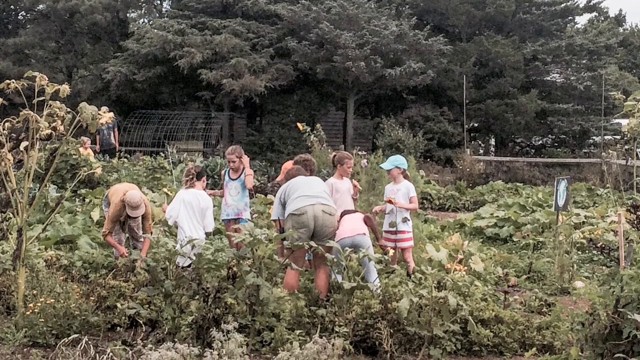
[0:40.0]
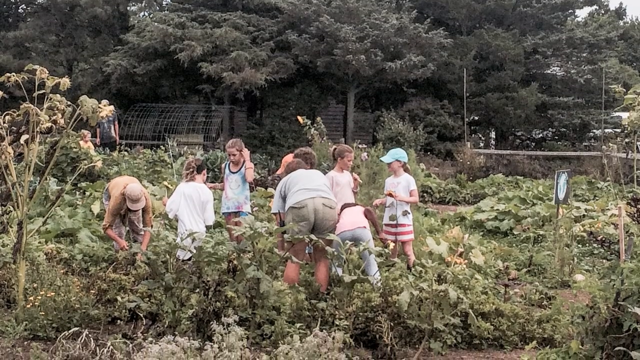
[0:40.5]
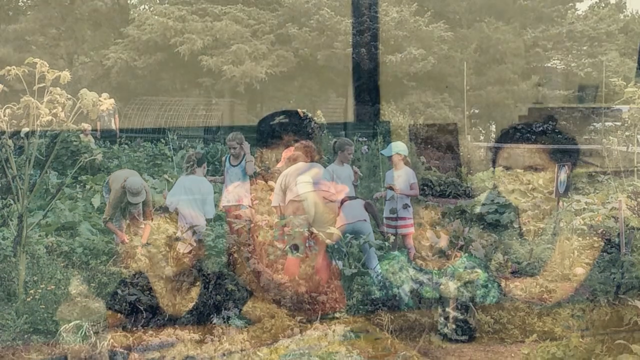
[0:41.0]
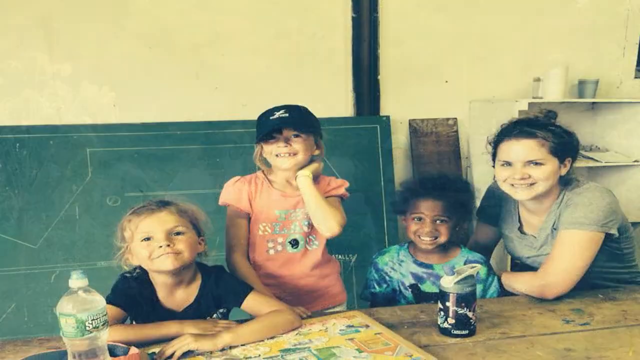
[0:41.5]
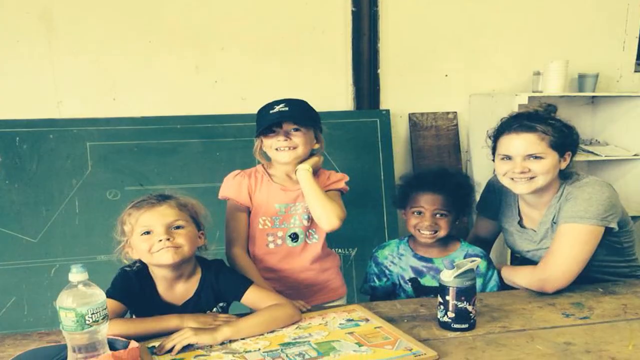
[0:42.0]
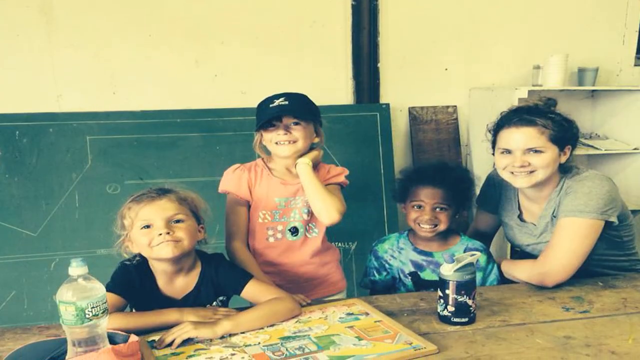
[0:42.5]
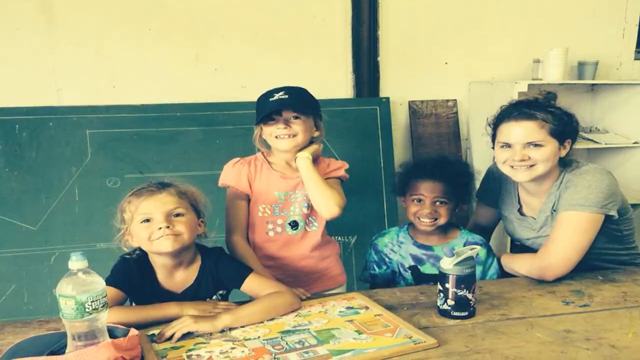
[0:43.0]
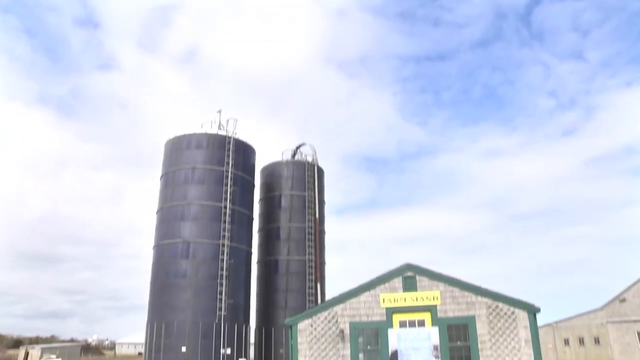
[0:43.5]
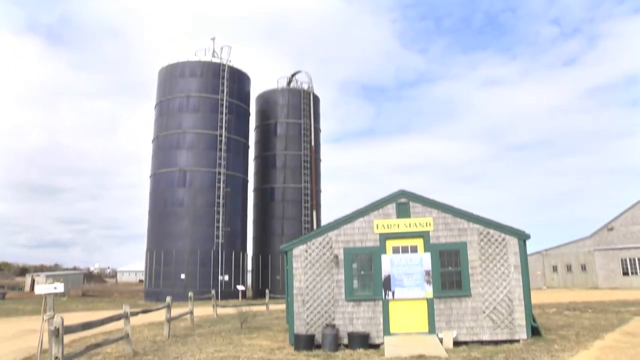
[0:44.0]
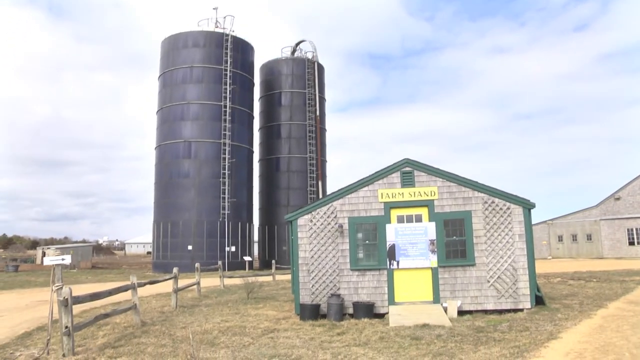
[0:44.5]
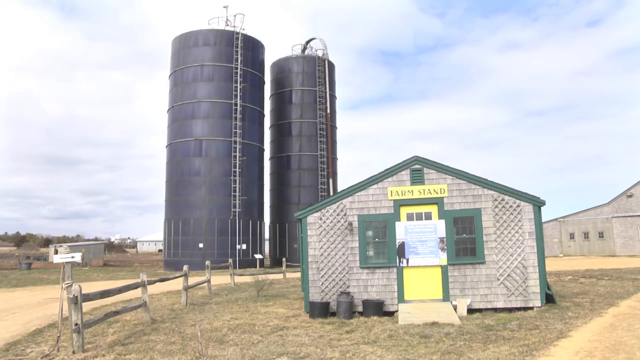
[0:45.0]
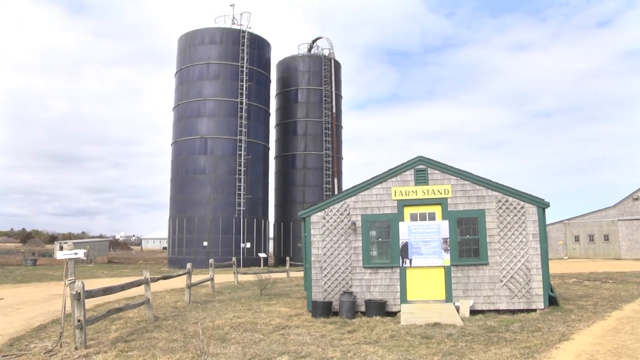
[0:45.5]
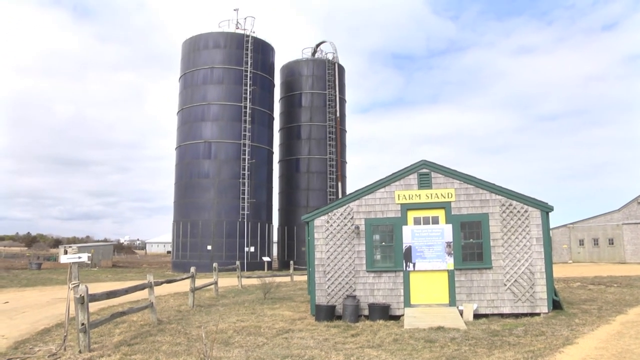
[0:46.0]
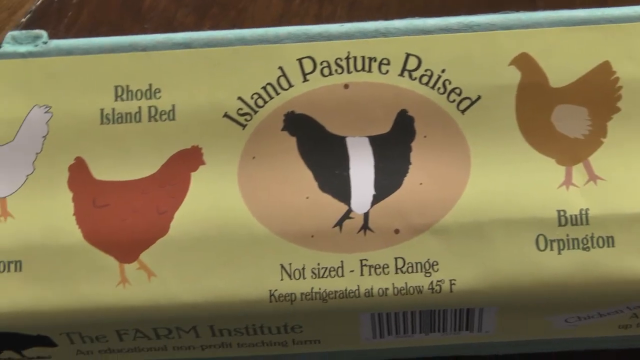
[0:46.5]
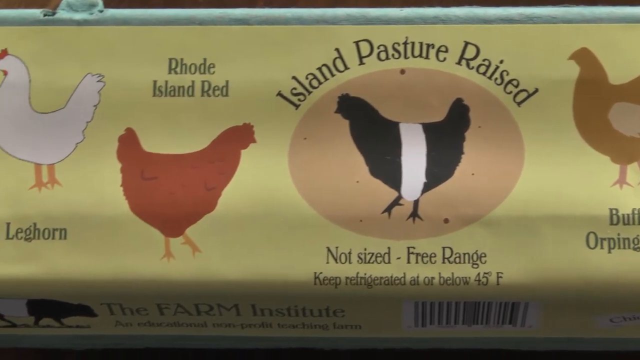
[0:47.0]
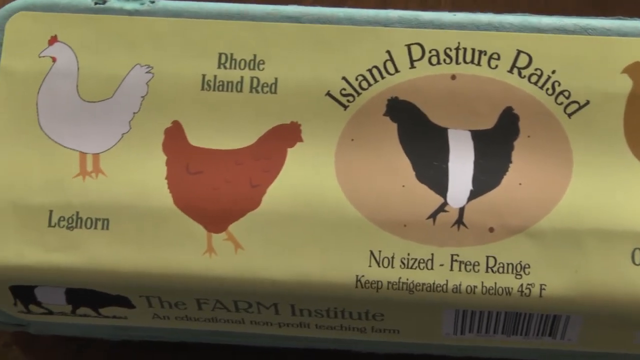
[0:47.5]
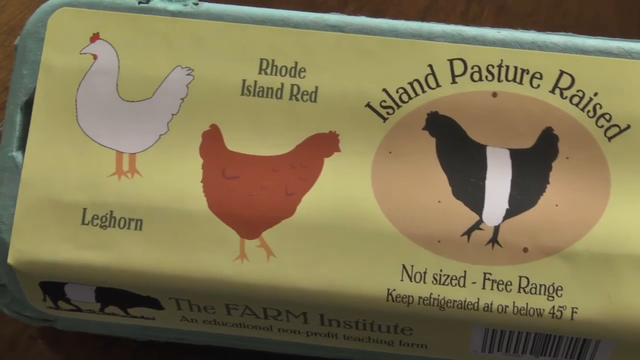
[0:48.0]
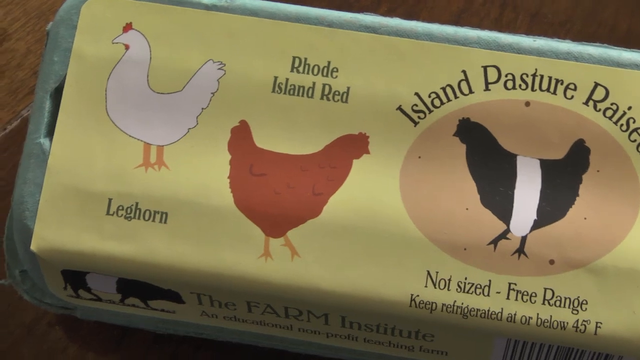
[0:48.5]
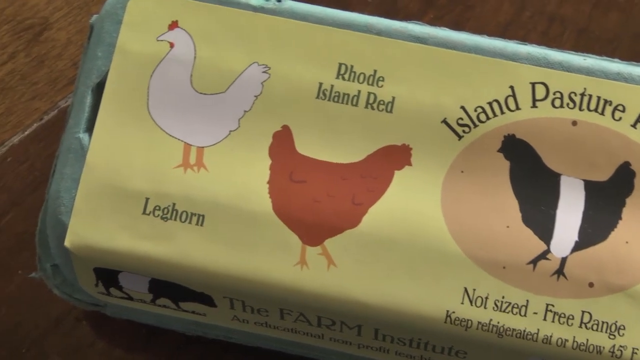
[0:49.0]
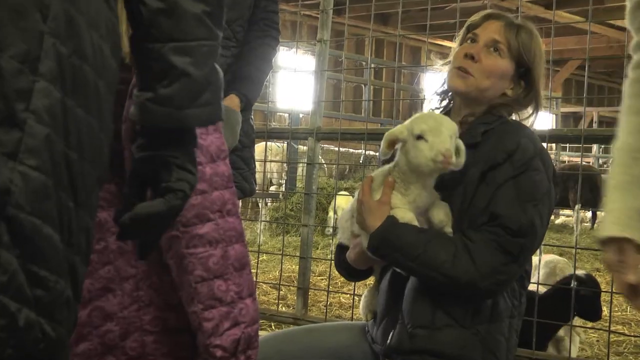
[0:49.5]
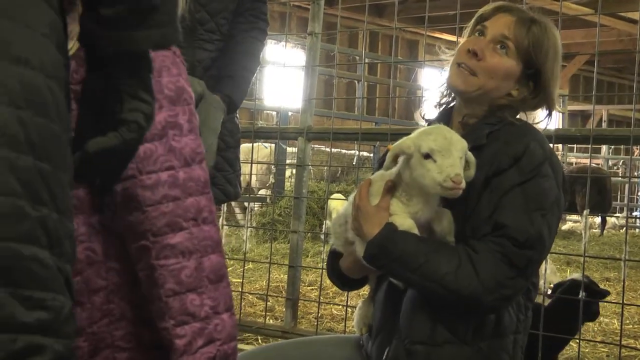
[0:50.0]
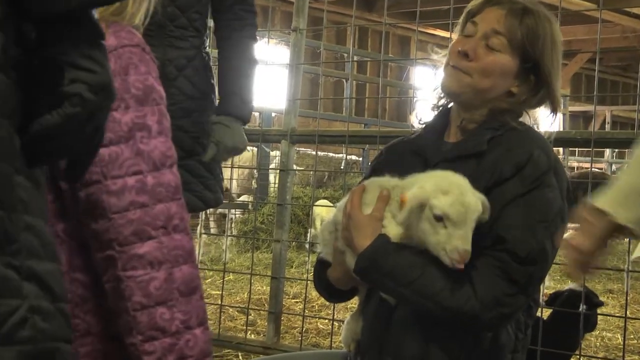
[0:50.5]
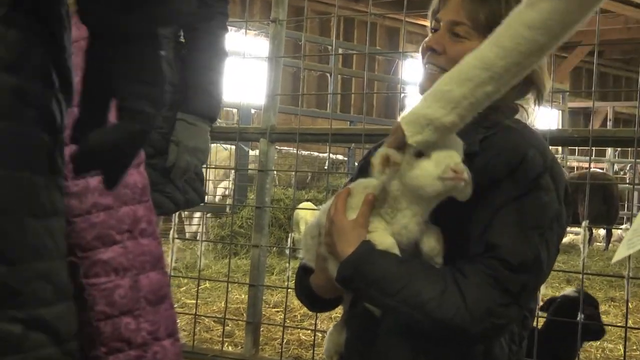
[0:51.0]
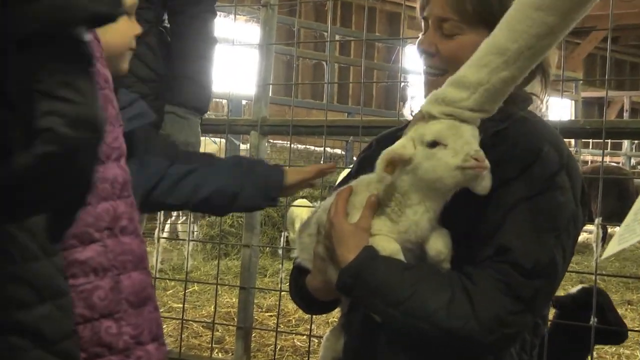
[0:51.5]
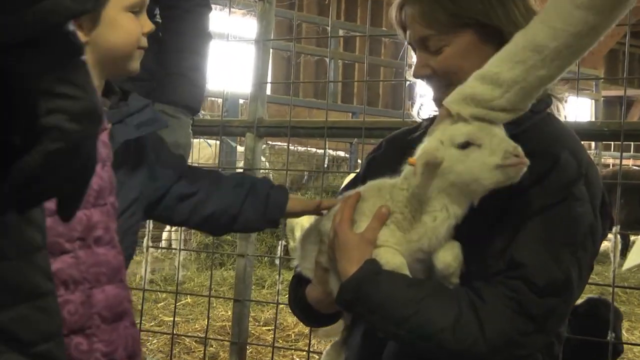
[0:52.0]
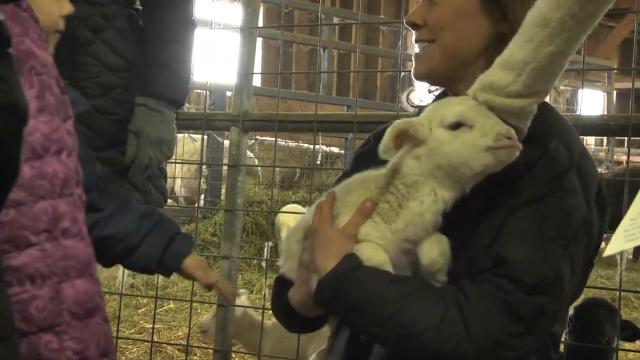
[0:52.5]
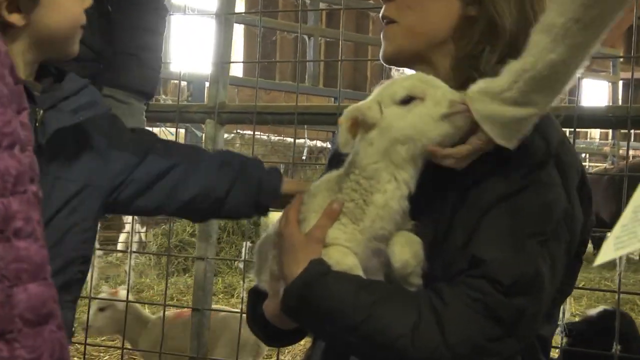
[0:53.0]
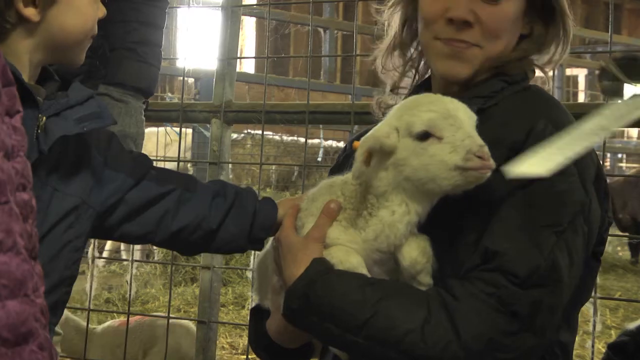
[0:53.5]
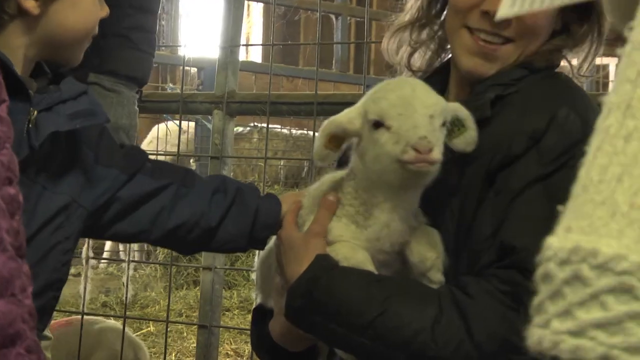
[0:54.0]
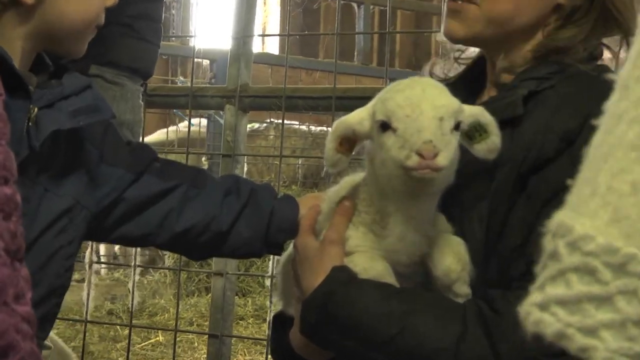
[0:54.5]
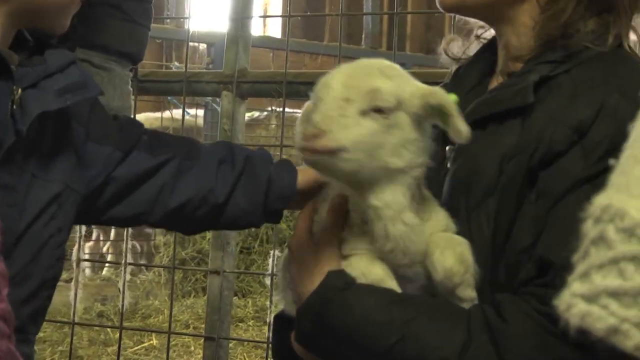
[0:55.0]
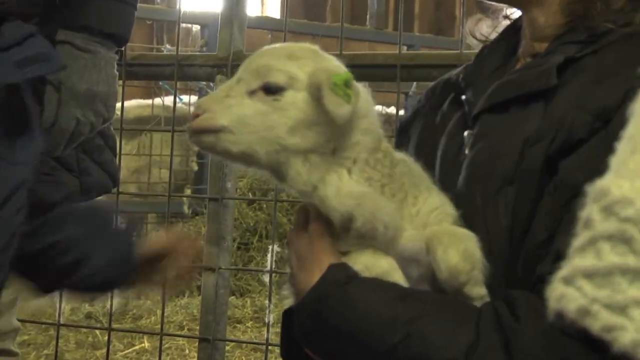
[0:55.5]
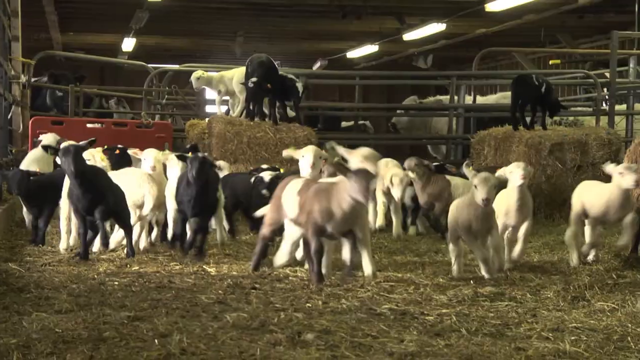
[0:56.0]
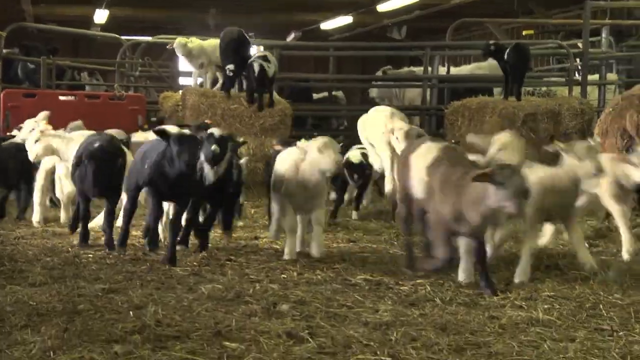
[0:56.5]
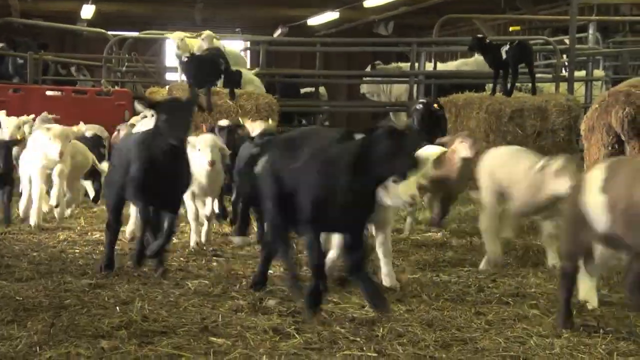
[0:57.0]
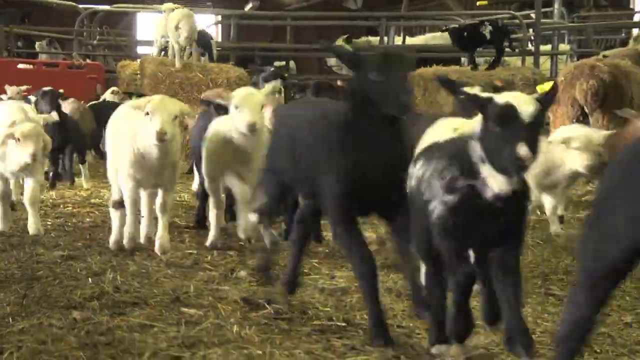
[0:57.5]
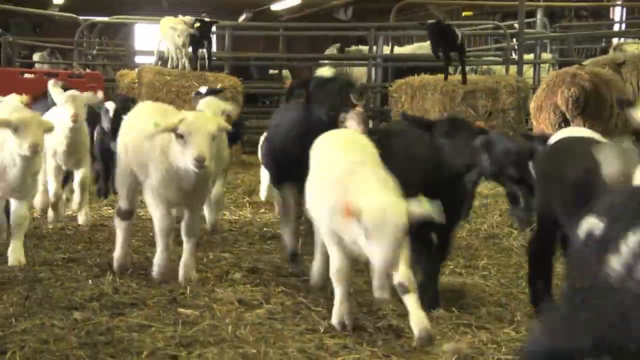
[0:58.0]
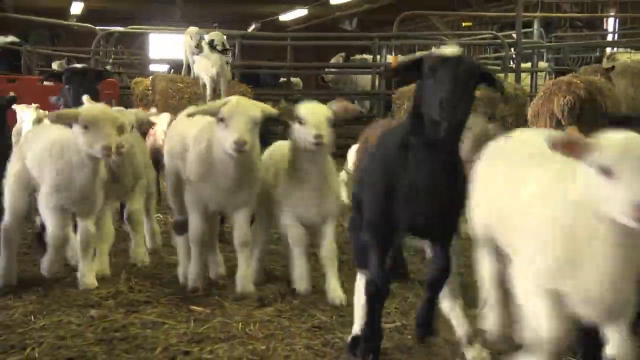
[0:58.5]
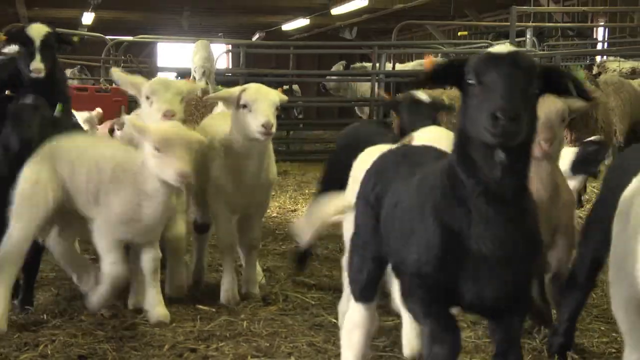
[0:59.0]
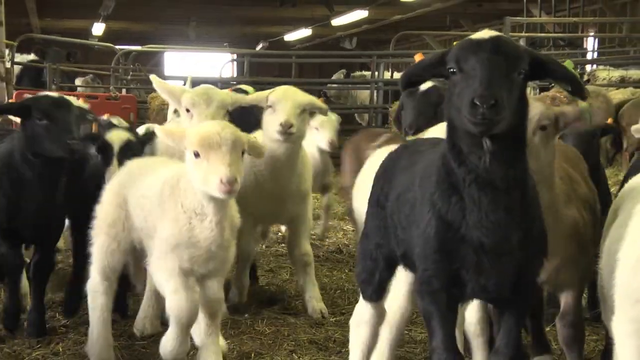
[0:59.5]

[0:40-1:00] A group of children and some adults look at some vegetation outside. A photograph follows from inside a building, showing two young children at a table, one standing, and a young woman sitting on the far right; they are having a drink. Next is a building with "farm stand" written over the top; behind it are two very large black metal round towers, each with a ladder going up its side, and a road runs between the building and the towers. A close-up shows a box of eggs with the brand name "Island Pasture Raised" and "Rhode Island Red", which also shows other chickens, including "Leghorn". A woman kneels holding a white lamb and talks to members of the public, one or two of whom stroke the lamb. A close-up of a lamb's face follows. Then lots of lambs in the farm building gambol and run towards the camera, very inquisitive.